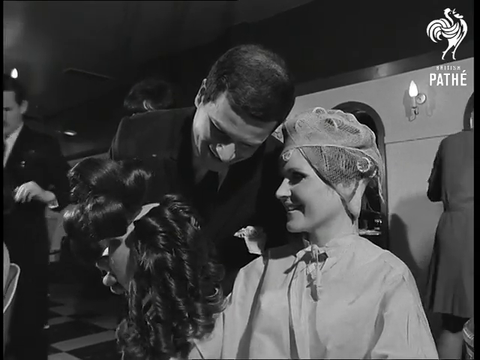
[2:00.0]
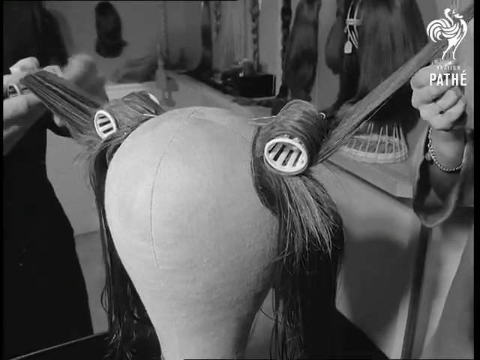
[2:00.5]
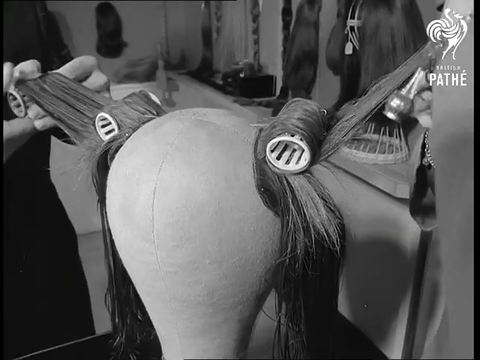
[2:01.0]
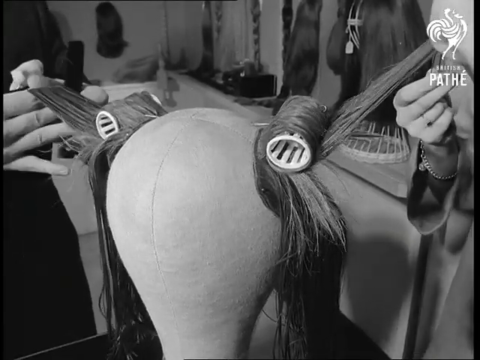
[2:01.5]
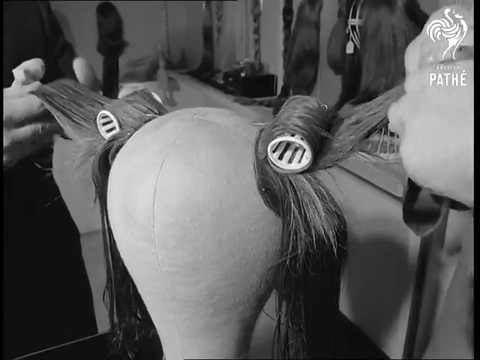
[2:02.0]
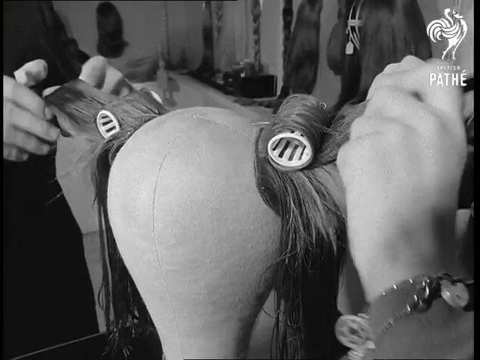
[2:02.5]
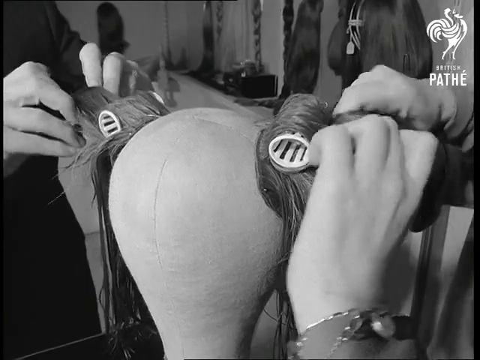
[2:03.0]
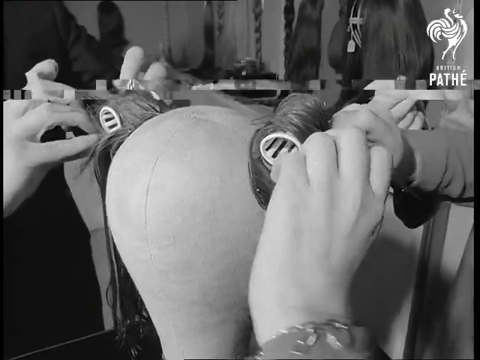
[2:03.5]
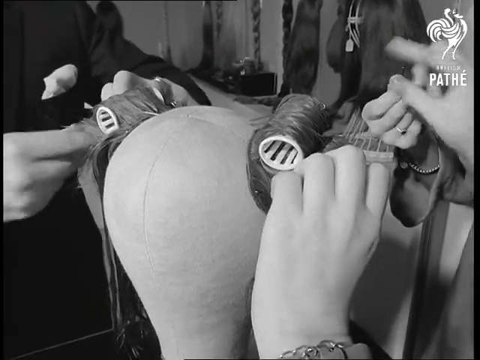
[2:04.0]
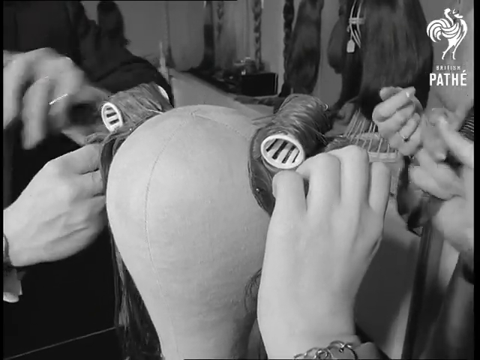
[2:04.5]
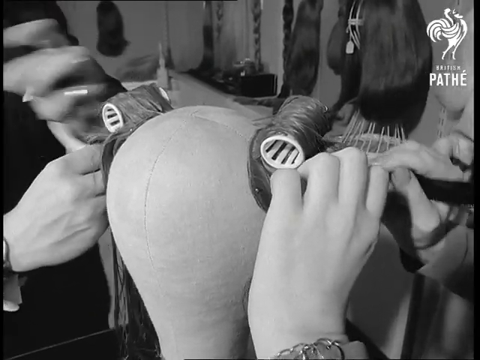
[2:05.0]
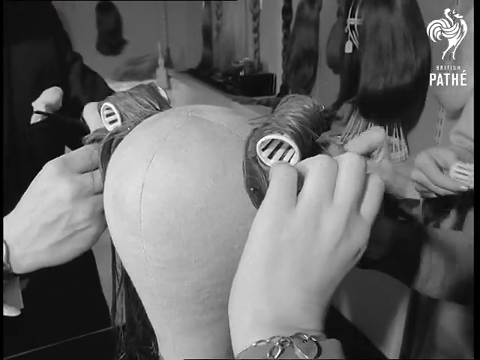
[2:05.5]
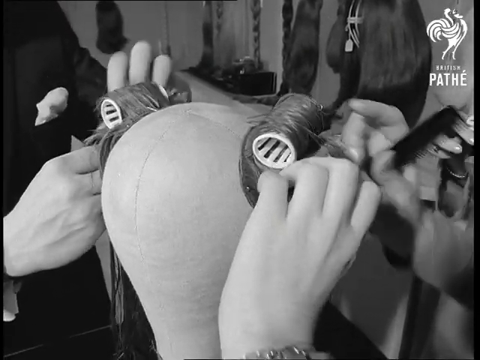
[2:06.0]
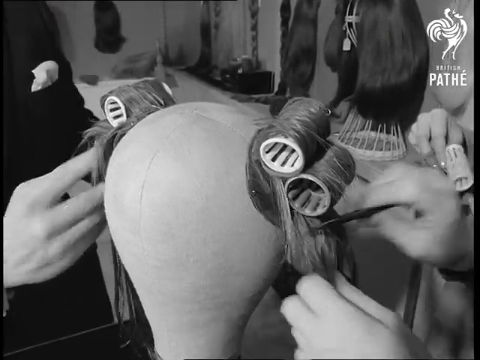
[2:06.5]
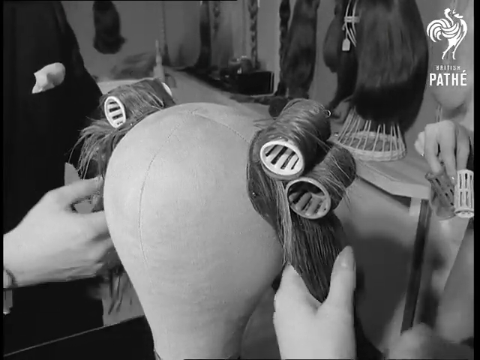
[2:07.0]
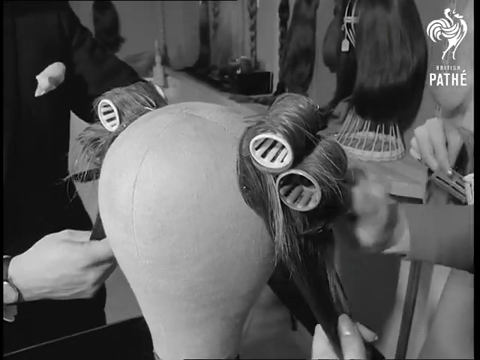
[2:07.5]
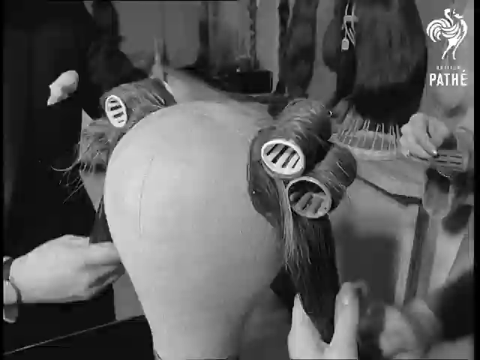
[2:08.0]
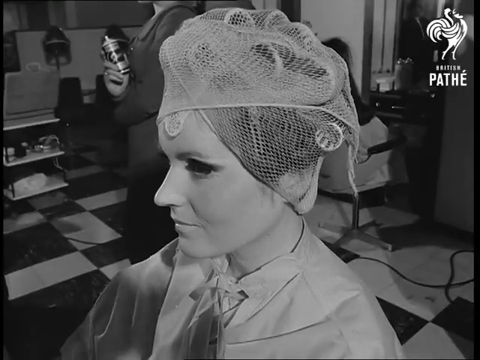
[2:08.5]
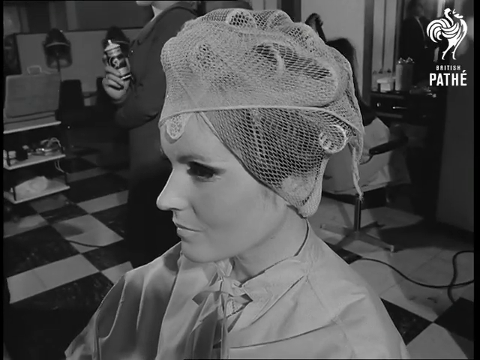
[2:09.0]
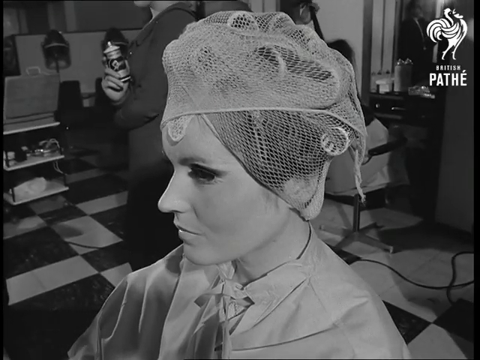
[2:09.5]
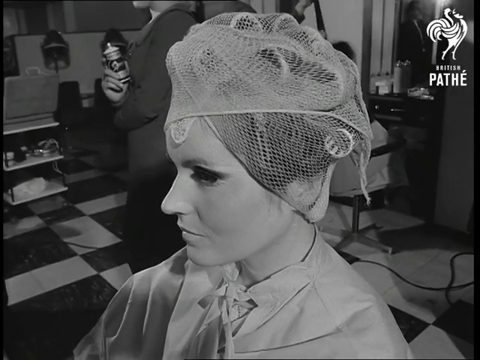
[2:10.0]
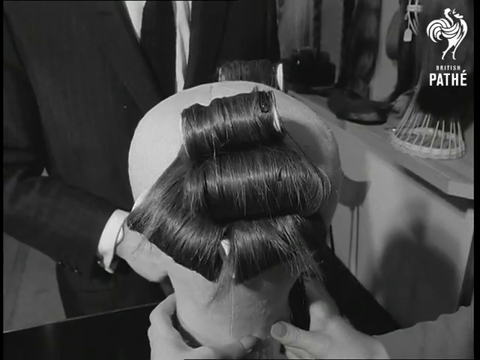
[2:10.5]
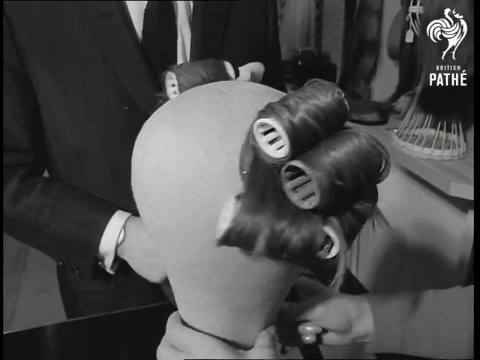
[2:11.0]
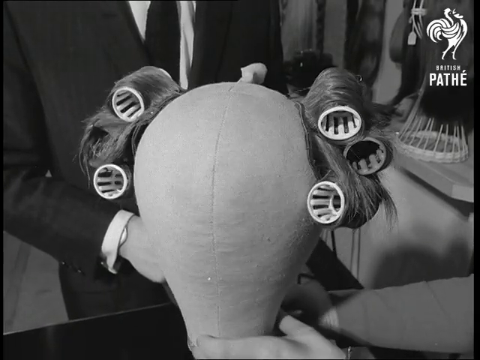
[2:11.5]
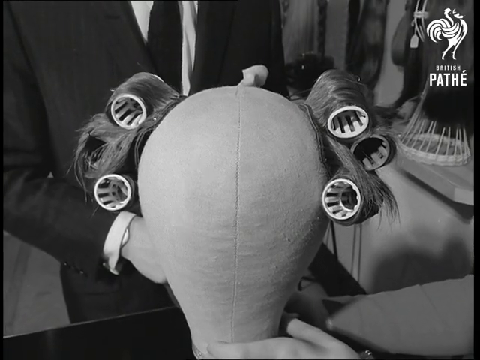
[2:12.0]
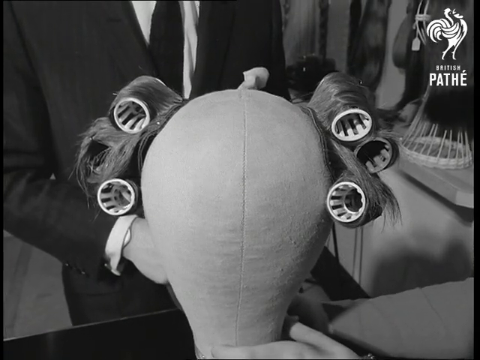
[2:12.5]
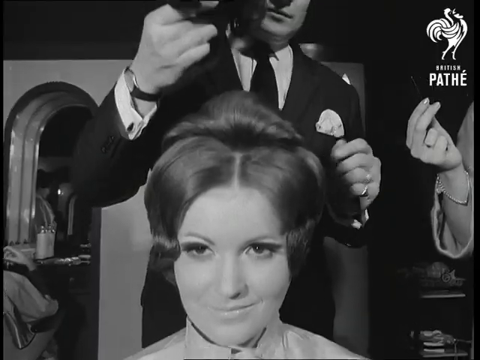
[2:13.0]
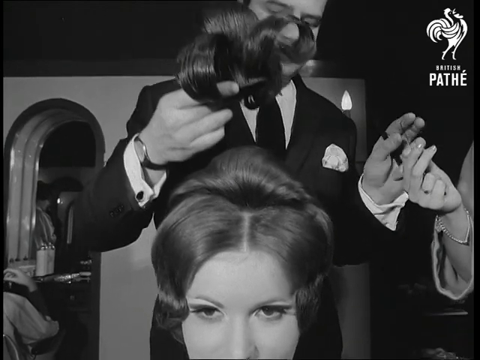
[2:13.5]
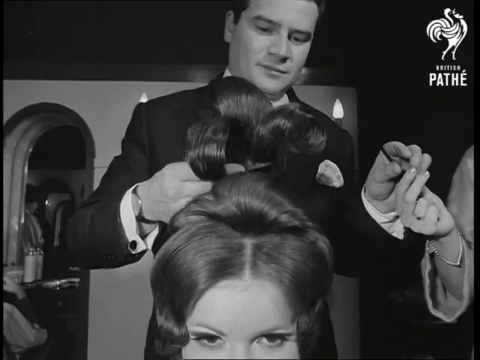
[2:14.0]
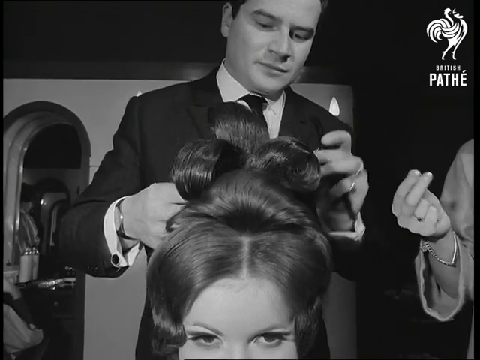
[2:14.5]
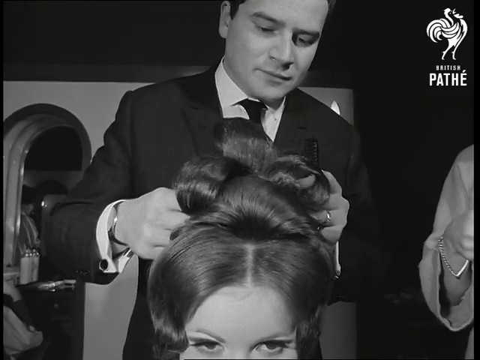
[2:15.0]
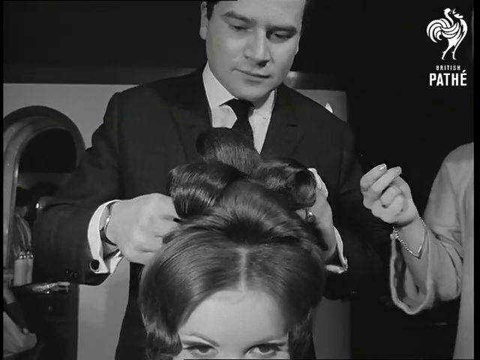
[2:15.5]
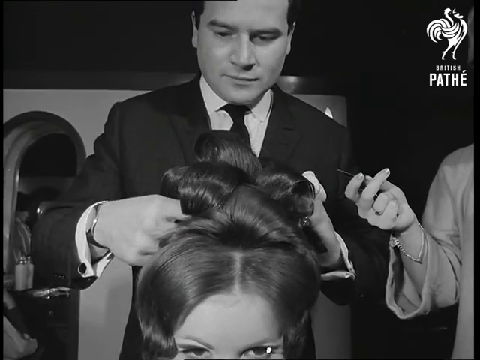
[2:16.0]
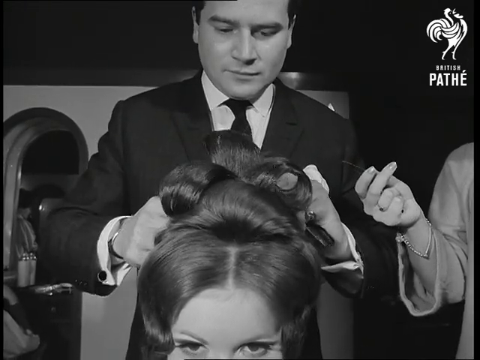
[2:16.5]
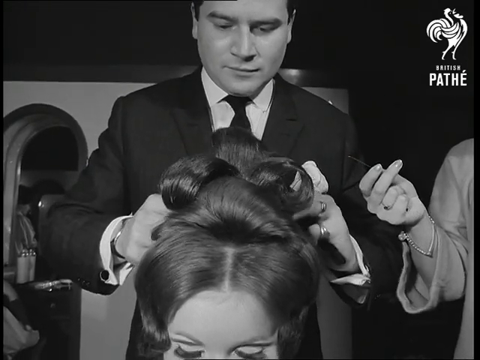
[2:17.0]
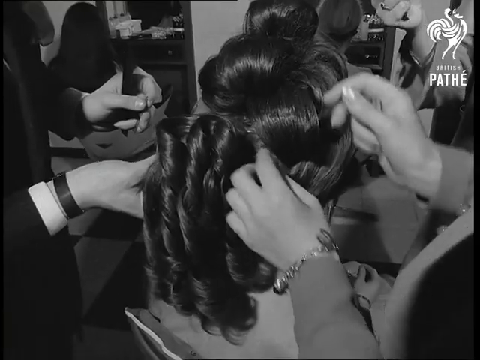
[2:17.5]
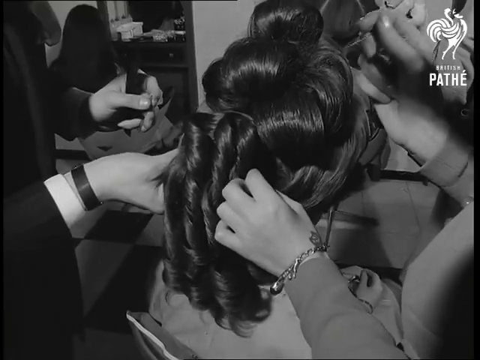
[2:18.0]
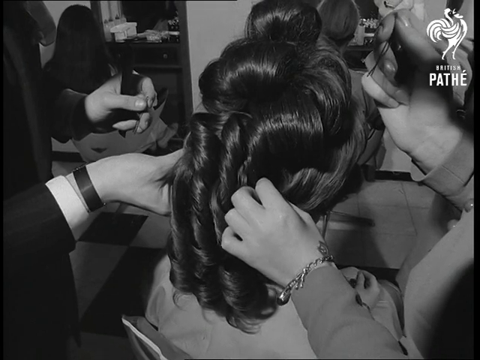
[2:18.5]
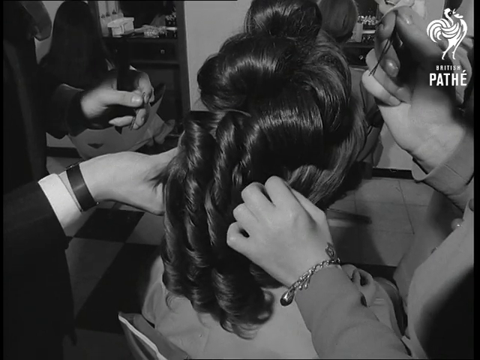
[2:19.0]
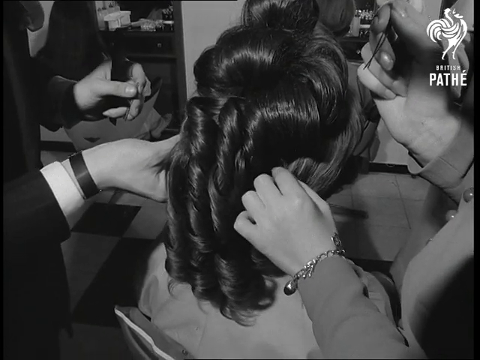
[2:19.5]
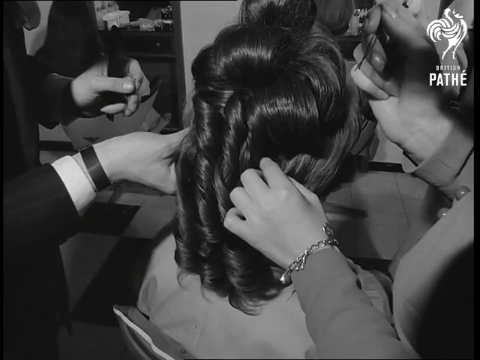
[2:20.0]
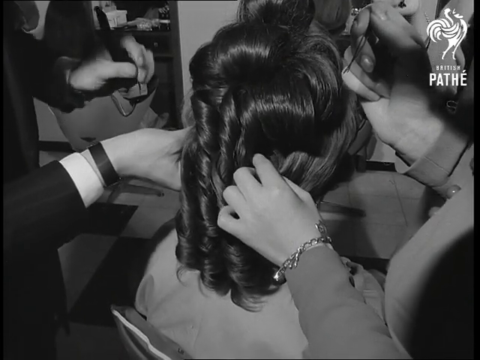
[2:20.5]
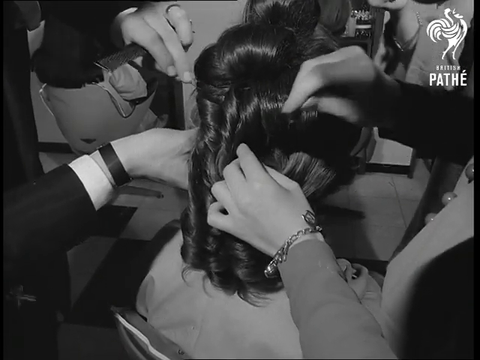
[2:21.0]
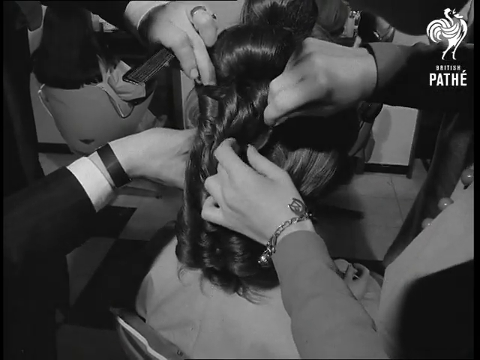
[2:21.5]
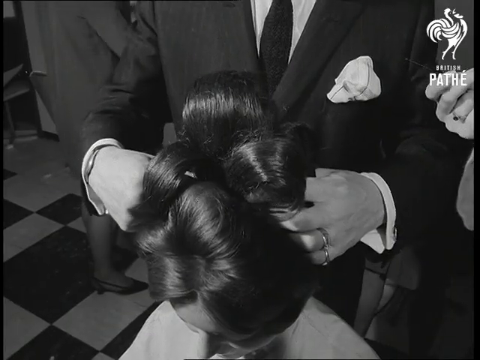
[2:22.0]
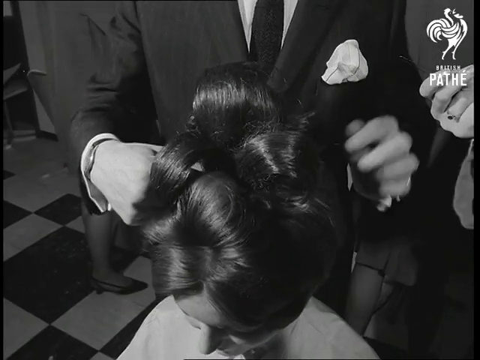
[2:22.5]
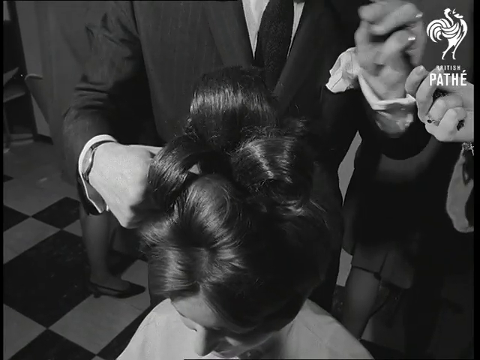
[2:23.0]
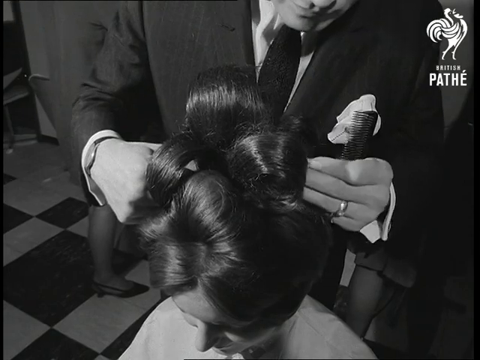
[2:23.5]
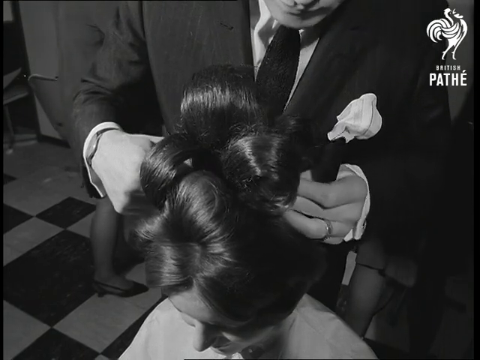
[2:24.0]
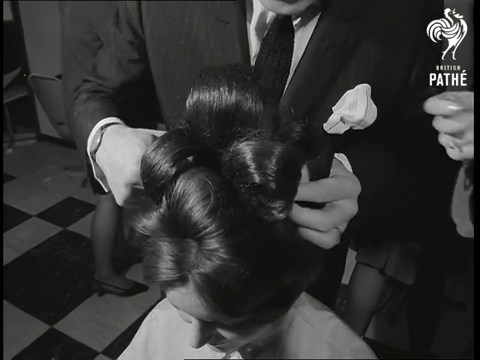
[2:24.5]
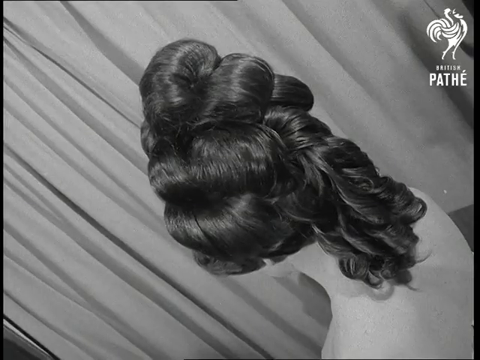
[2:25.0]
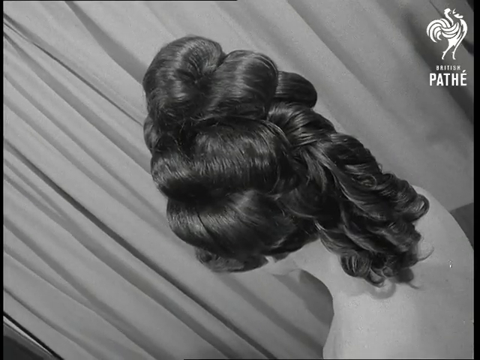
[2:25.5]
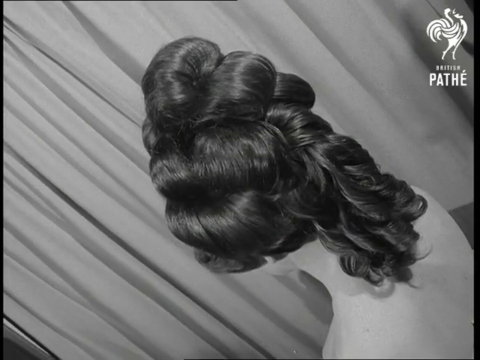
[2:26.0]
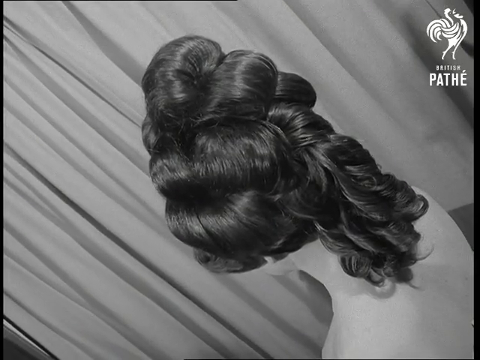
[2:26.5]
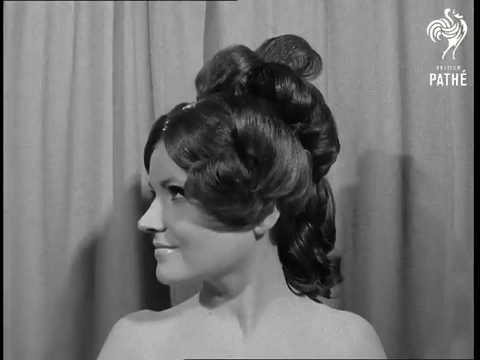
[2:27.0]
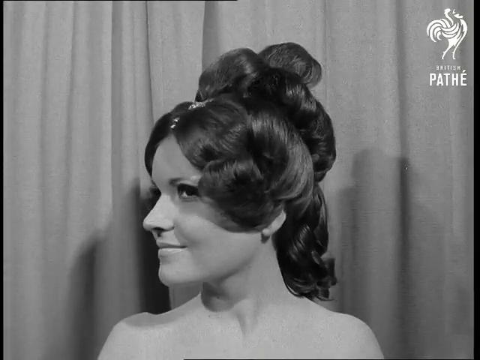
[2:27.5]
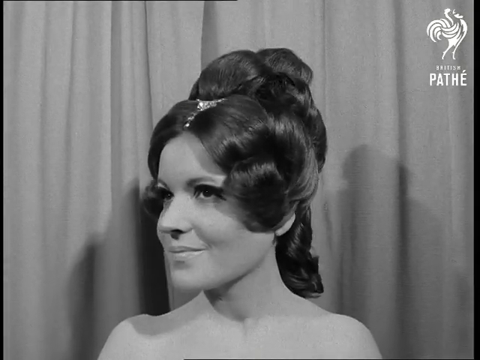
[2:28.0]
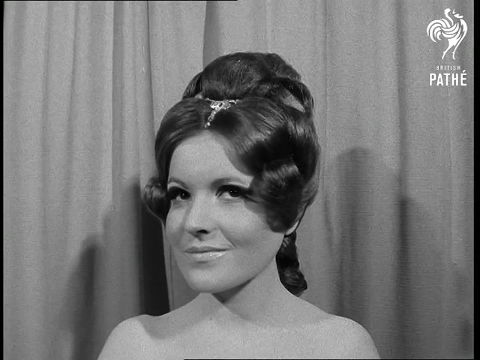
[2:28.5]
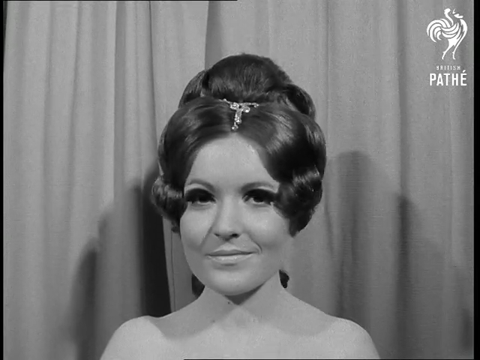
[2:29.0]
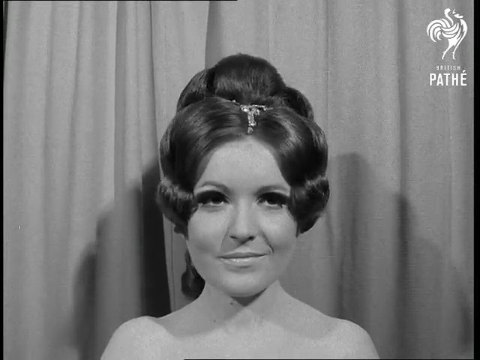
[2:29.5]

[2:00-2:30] A mannequin head has hair on each side and none in the center, and two people on either side of it put the hair in rollers. A close-up shows the woman as if facing the camera, with pieces of the dark wig on her head. Behind her, the man in the dark suit places curled pieces of the wig onto her head, handed to him by a woman on the right side of the screen. After a transition, the man puts the curled pieces onto the woman's head. She models her new wig for the camera, turning slowly, while the man secures the wig pieces onto her head with bobby pins.